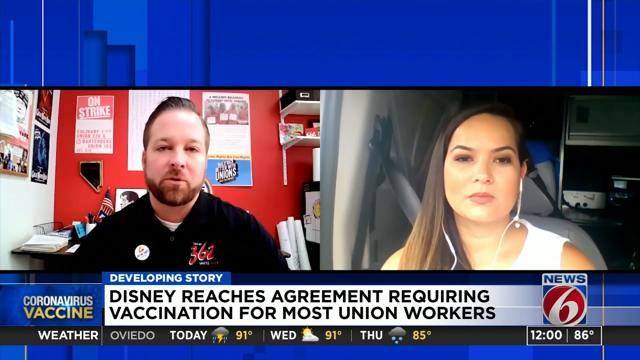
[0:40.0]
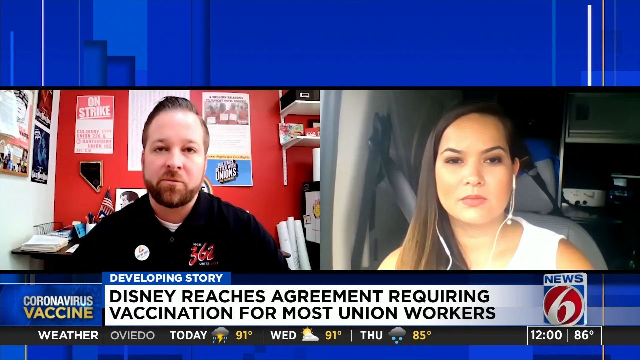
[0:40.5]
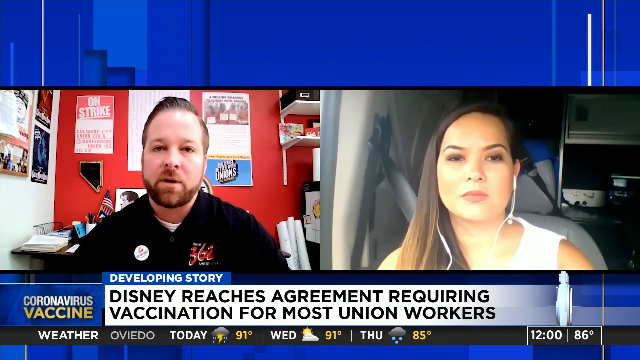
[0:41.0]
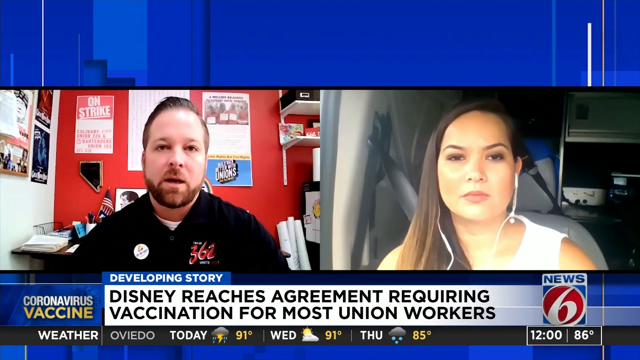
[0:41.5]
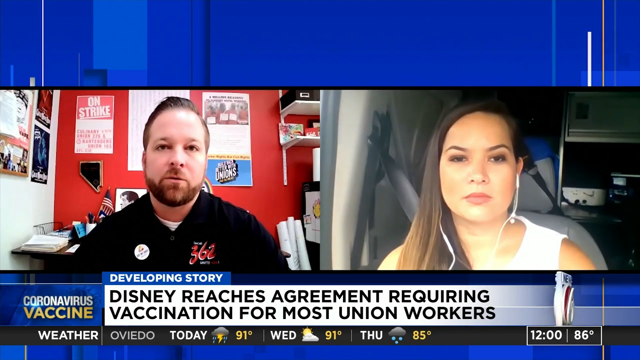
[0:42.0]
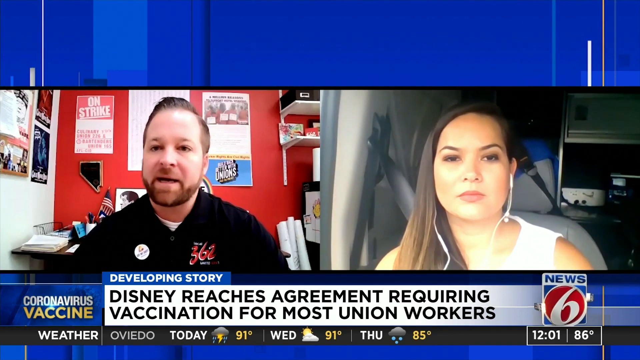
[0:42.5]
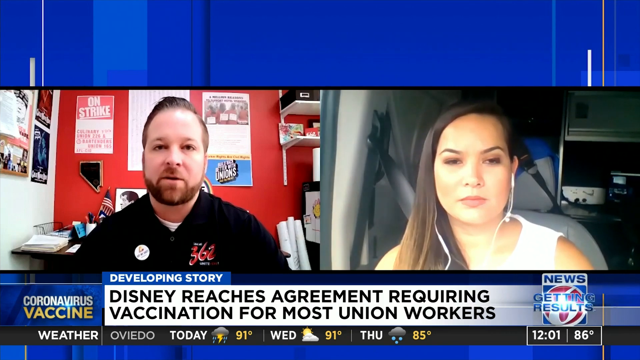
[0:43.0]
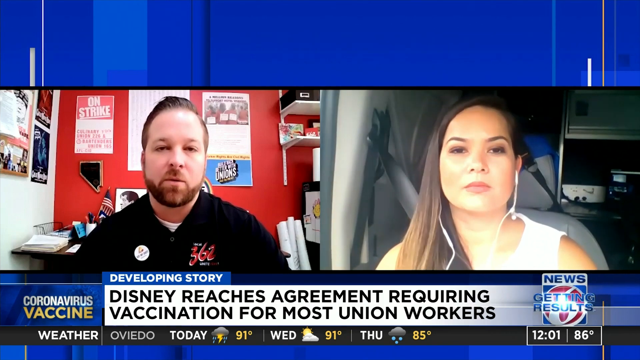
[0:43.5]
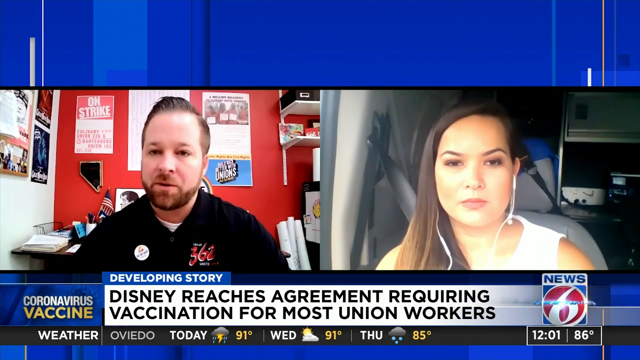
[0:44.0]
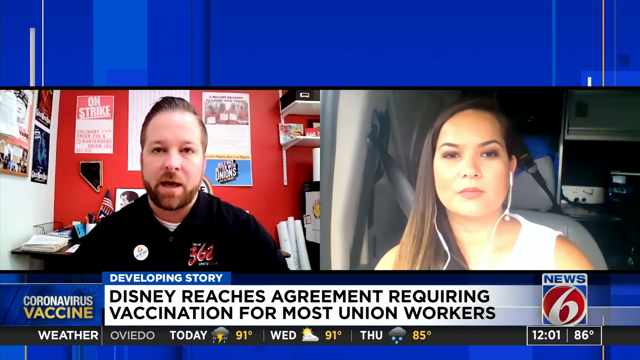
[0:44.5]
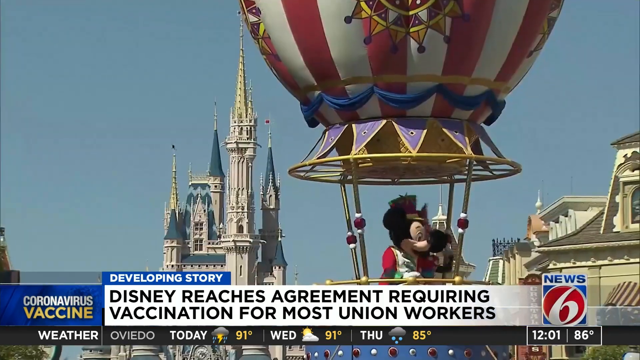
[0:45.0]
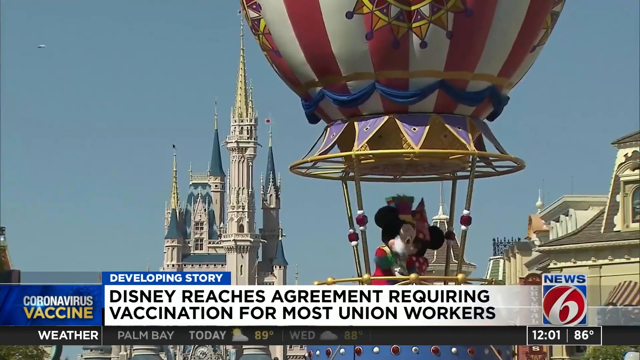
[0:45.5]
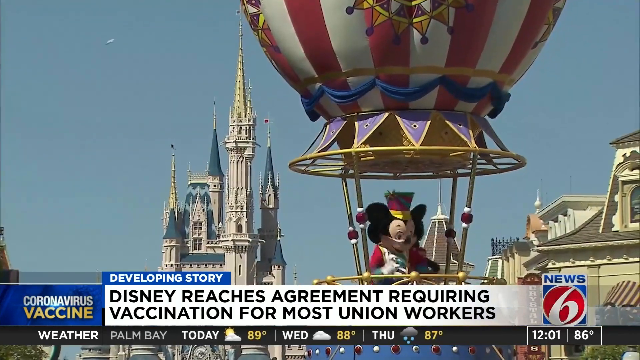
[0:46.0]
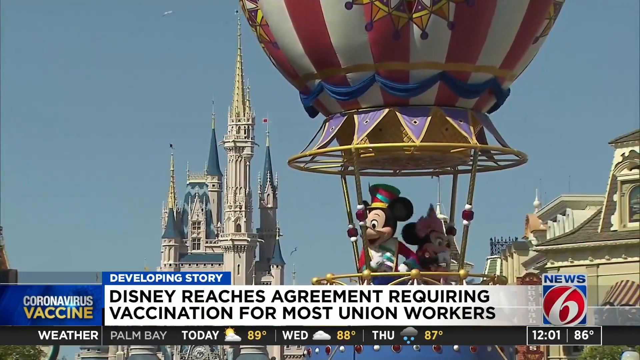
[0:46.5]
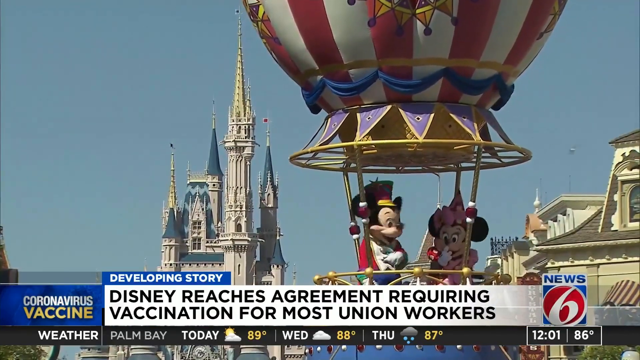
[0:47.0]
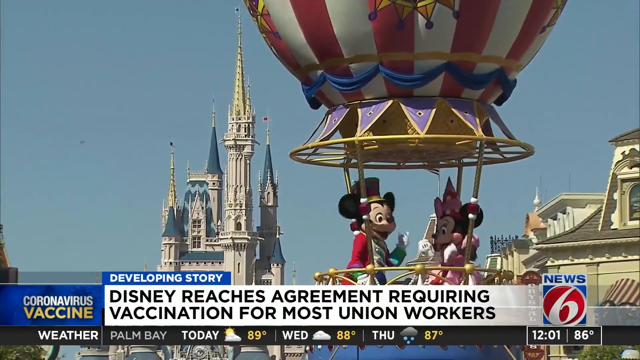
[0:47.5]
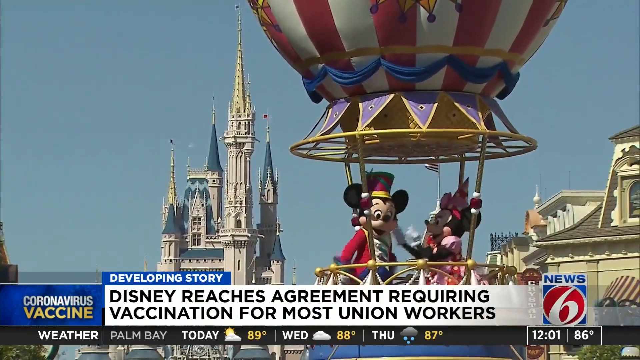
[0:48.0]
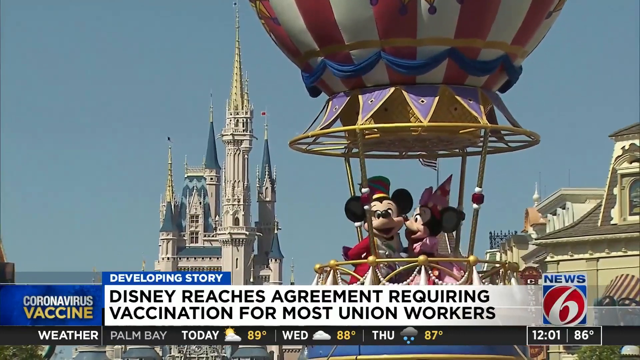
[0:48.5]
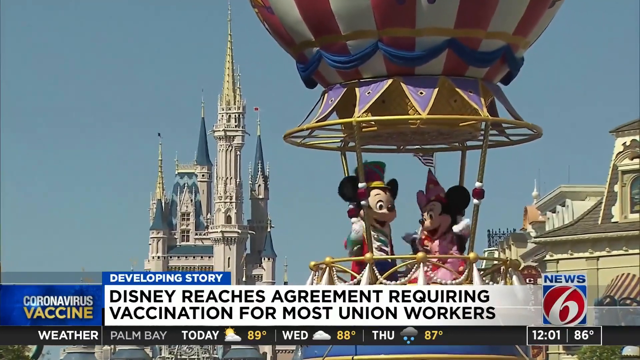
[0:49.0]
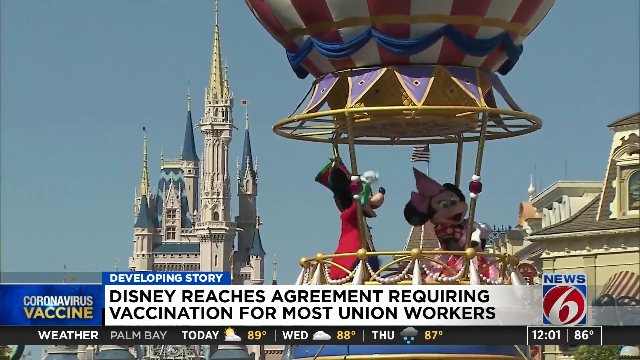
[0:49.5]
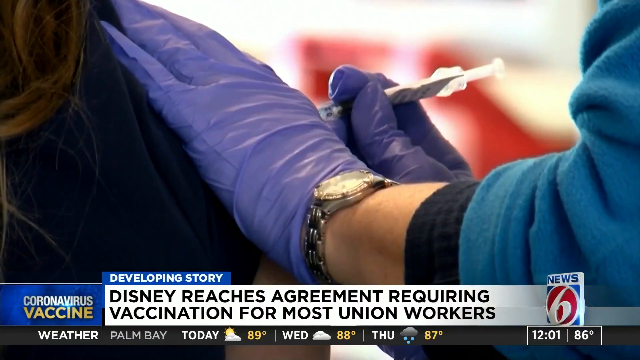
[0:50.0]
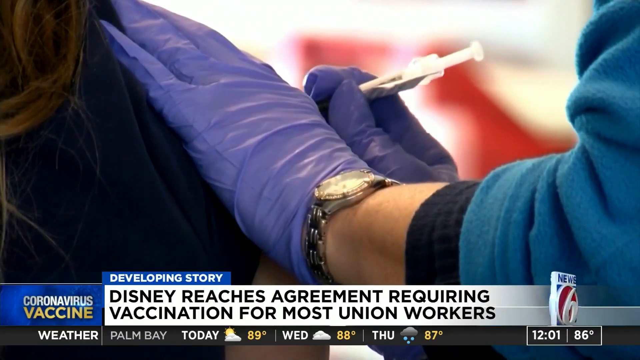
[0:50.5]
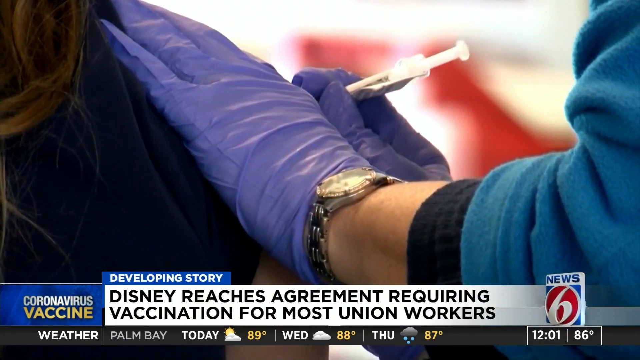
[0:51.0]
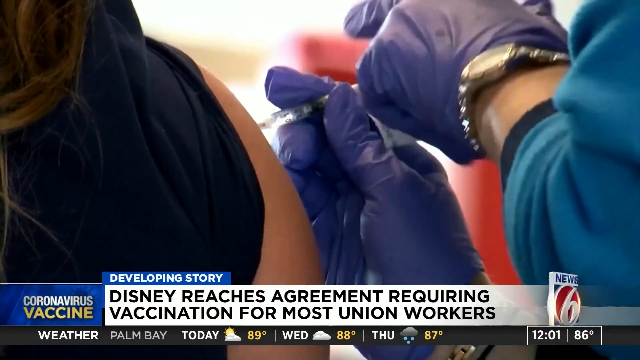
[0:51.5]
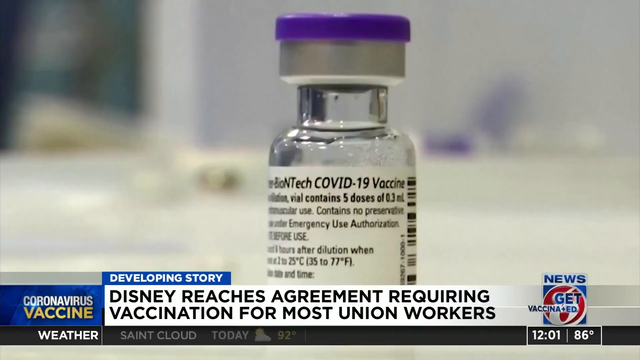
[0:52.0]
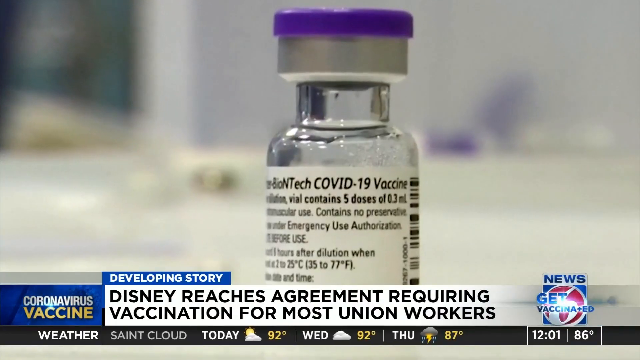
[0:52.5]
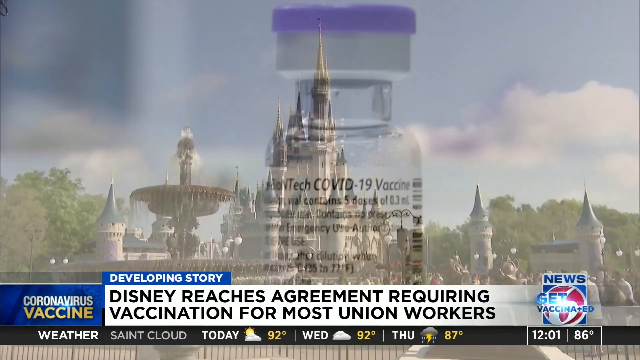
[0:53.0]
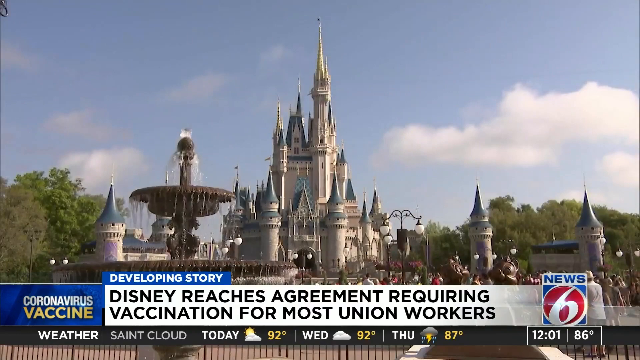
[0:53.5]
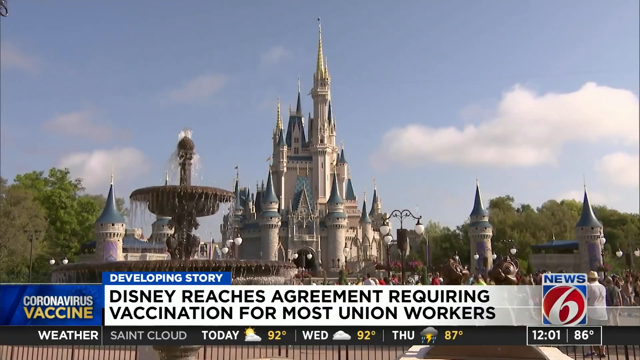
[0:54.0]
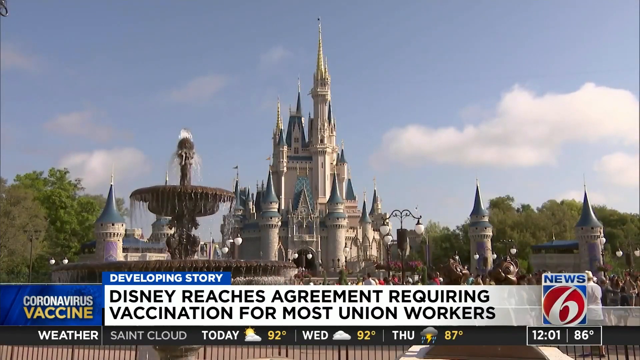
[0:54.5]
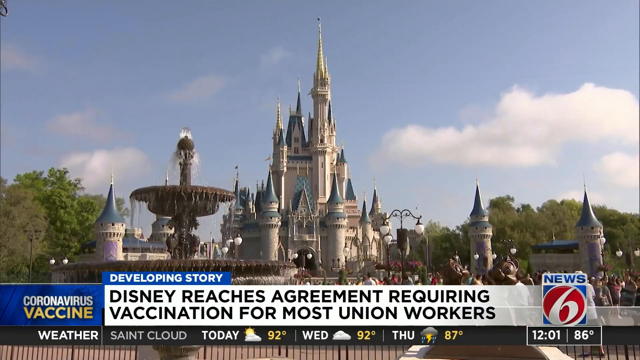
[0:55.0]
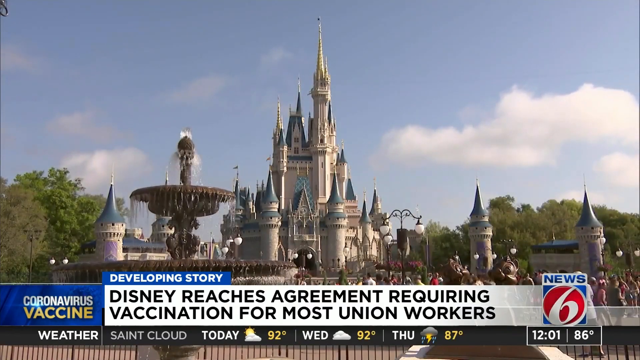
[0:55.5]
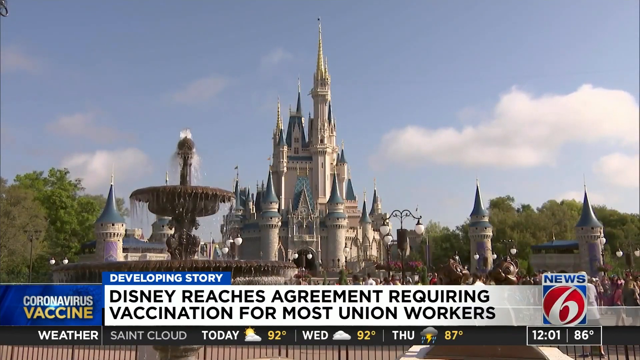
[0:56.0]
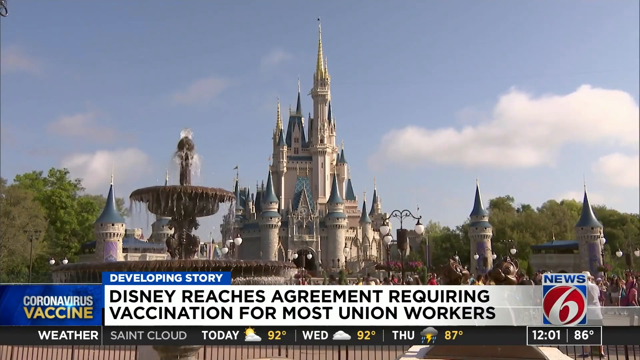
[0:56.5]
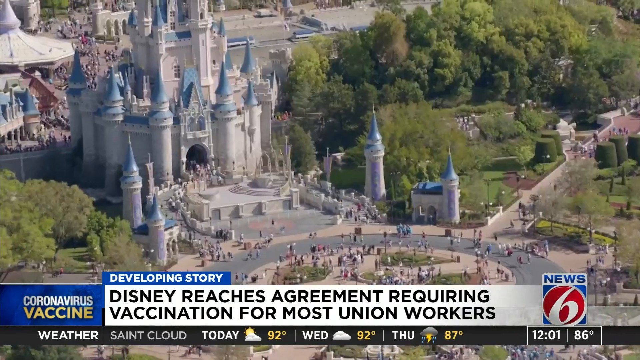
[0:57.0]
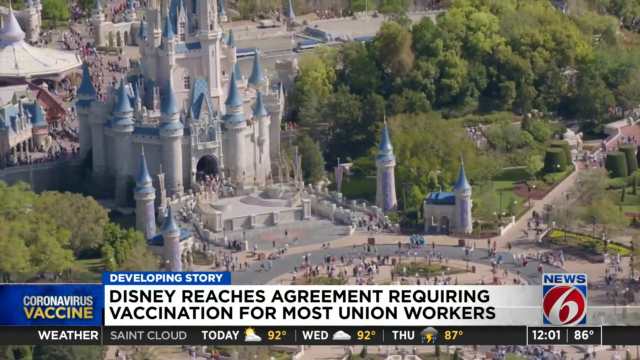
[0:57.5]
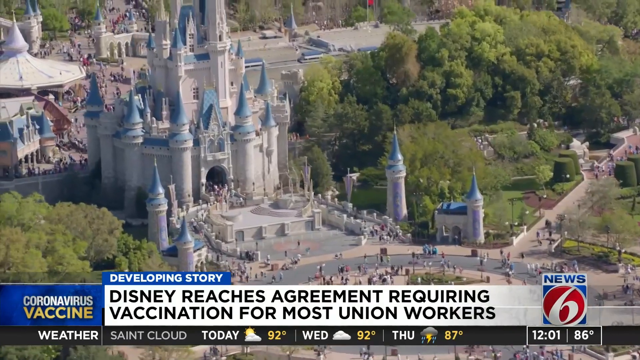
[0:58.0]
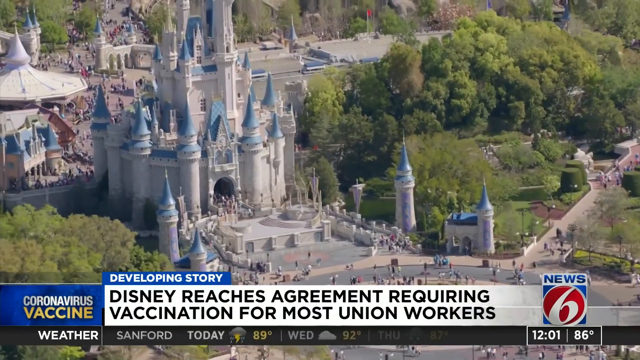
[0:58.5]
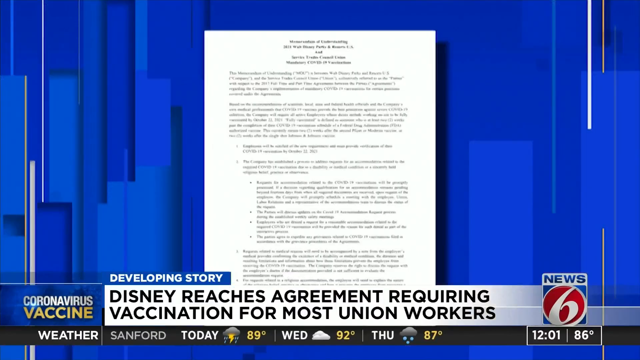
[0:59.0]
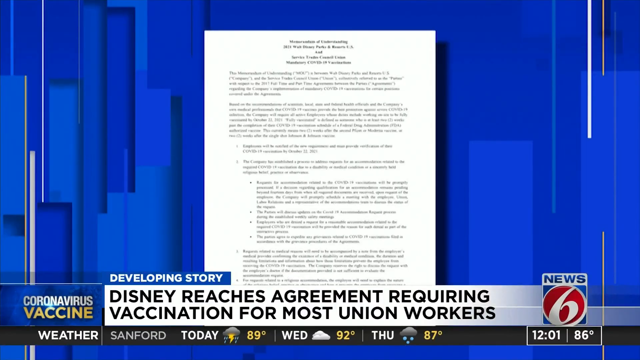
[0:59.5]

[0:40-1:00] The man in the black shirt, possibly the newscaster from News 6, is talking, and the woman with earbuds in, who is in a car, nods along with him. The video cuts to Walt Disney World in Lake Buena Vista, Florida, showing Main Street with the castle in the background and a parade going on, while the developing story about Disney reaching an agreement requiring vaccination for most of its union workers continues. It then cuts to people getting the vaccine and a close-up of a vaccine vial. The view pulls out to show the whole Cinderella Castle with a fountain in front of it, followed by an aerial view of the castle and a picture of what is apparently a letter sent to cast members.